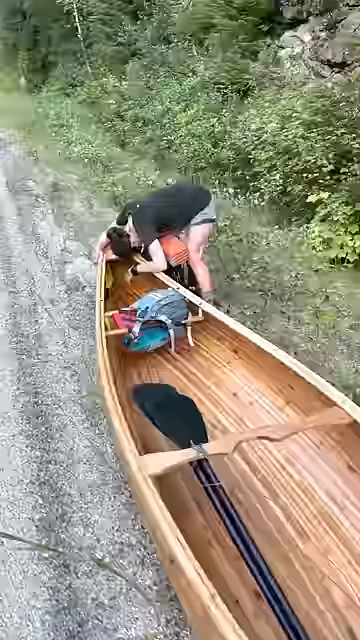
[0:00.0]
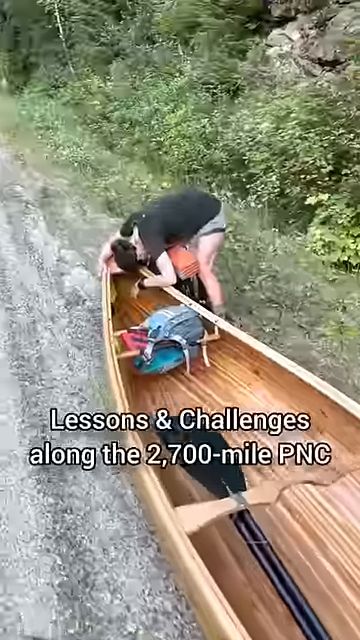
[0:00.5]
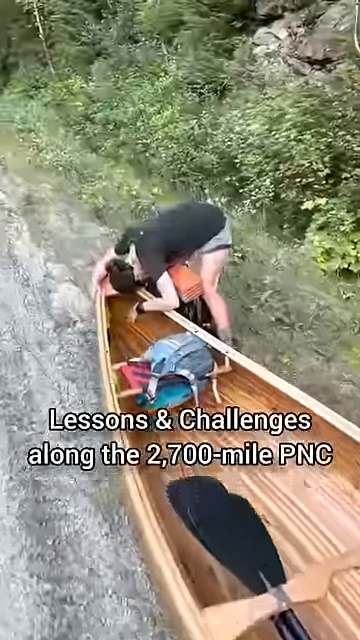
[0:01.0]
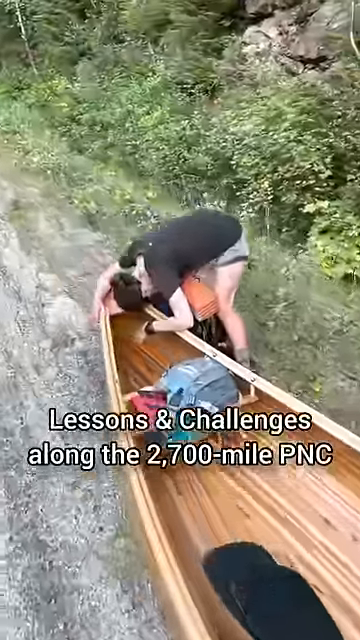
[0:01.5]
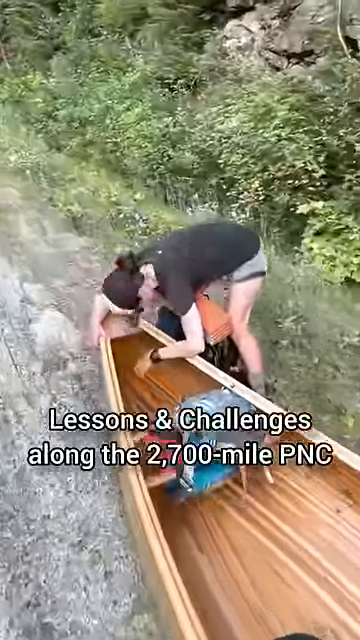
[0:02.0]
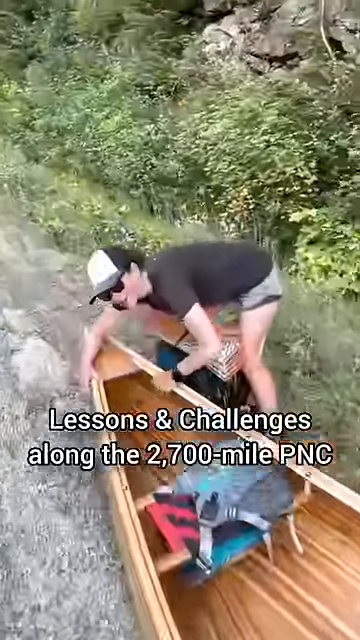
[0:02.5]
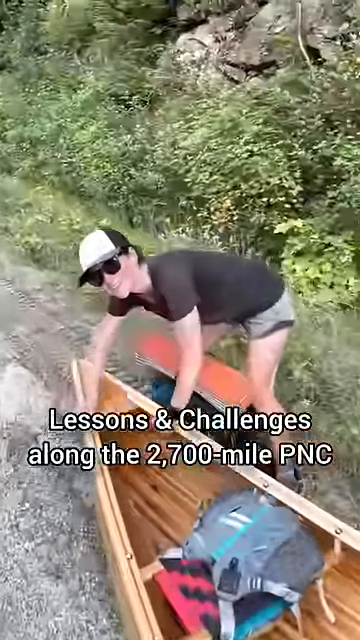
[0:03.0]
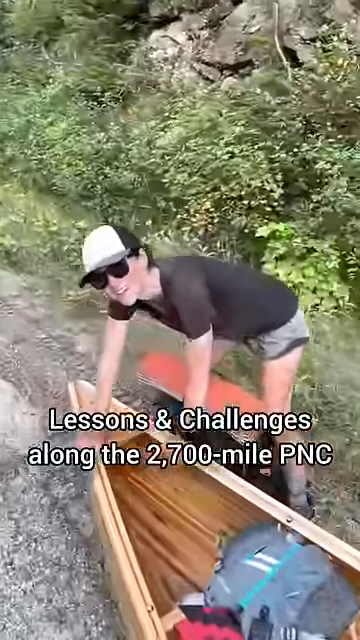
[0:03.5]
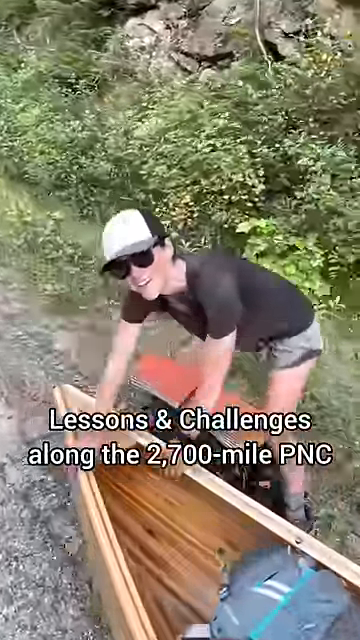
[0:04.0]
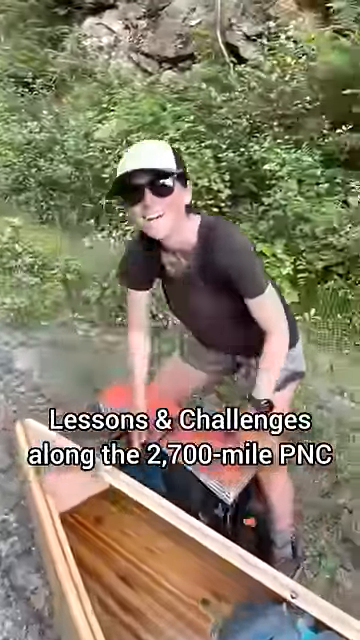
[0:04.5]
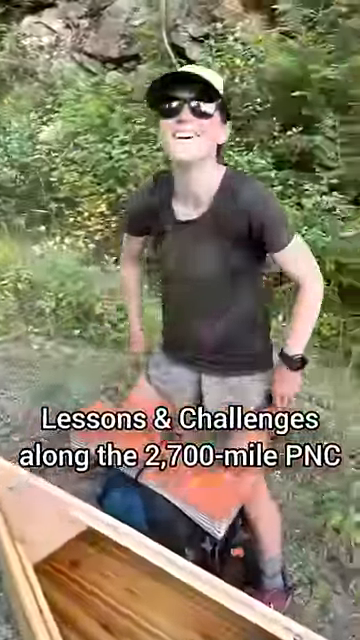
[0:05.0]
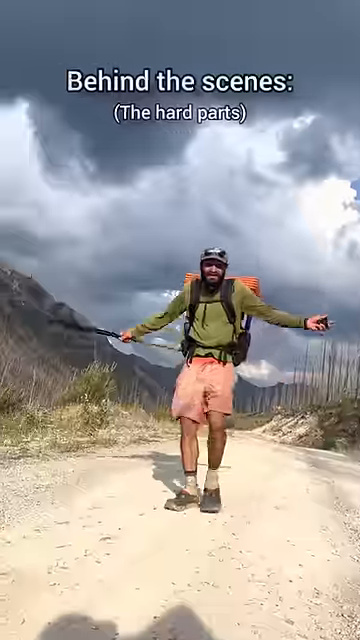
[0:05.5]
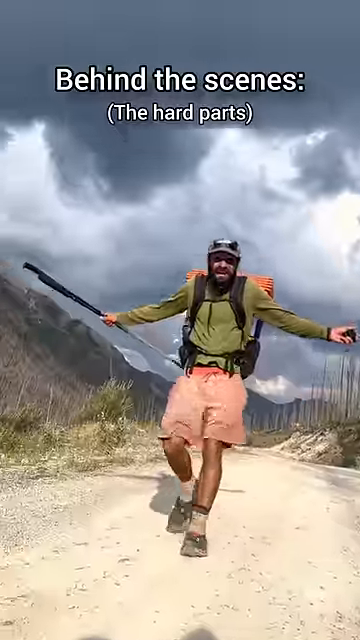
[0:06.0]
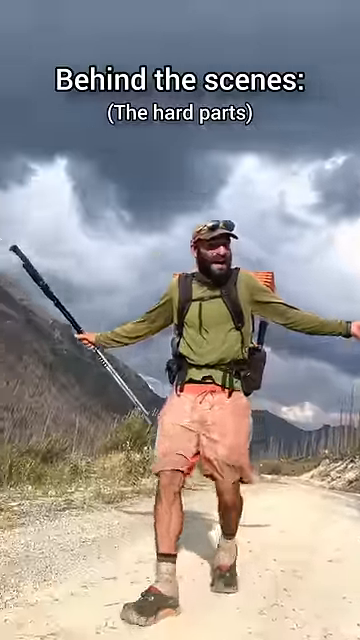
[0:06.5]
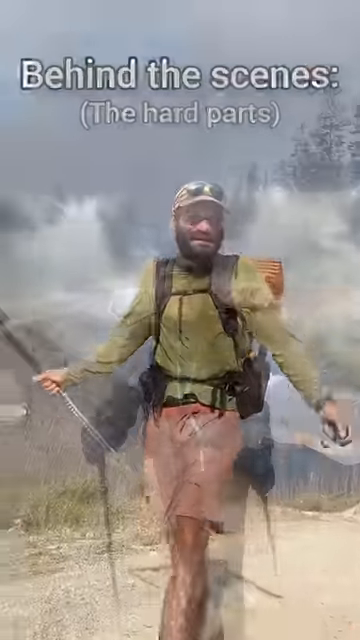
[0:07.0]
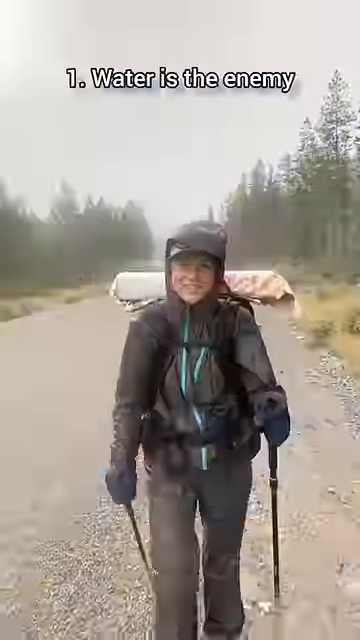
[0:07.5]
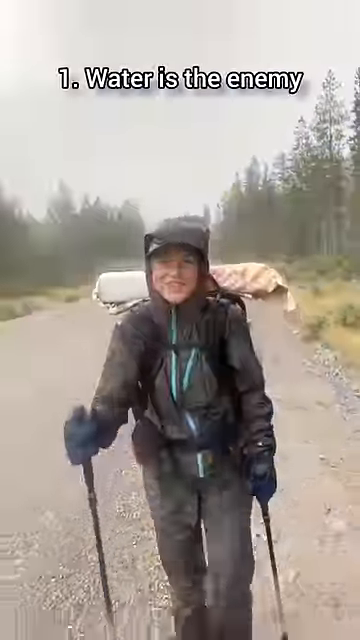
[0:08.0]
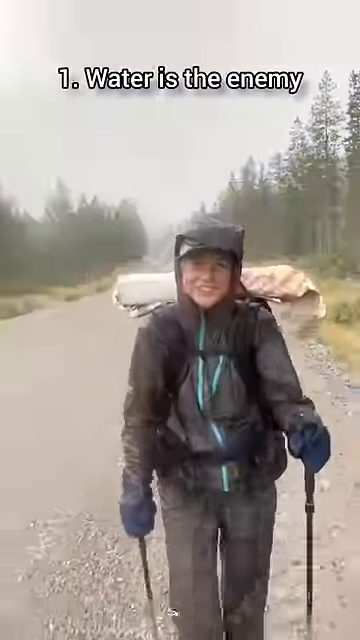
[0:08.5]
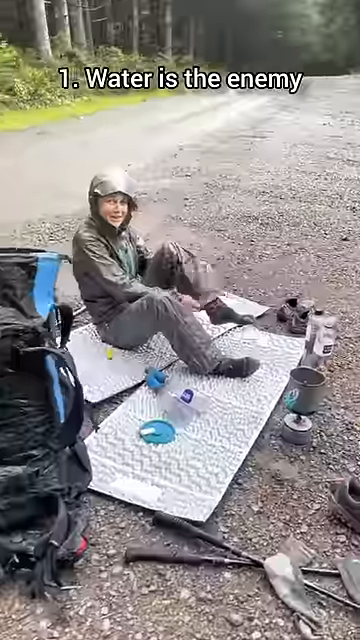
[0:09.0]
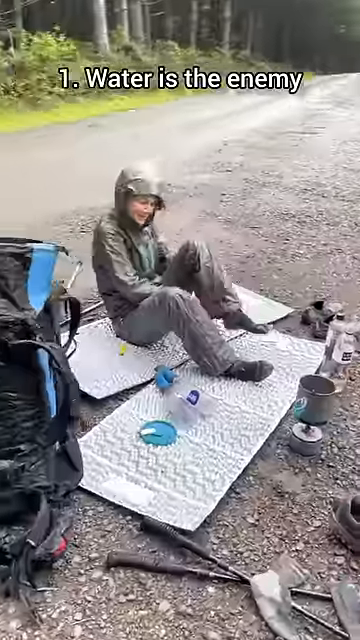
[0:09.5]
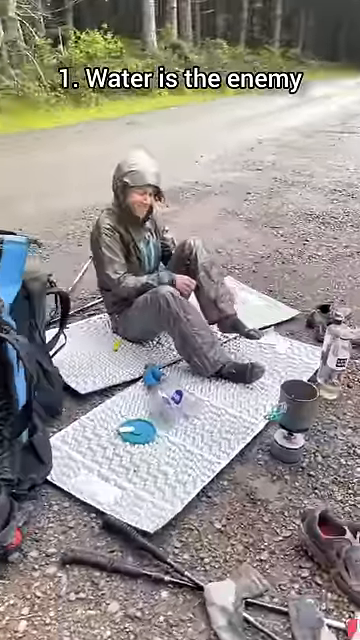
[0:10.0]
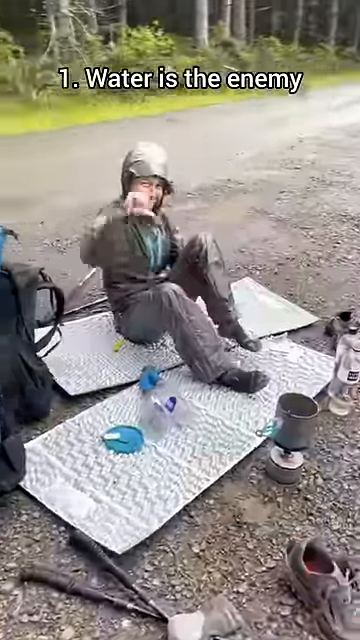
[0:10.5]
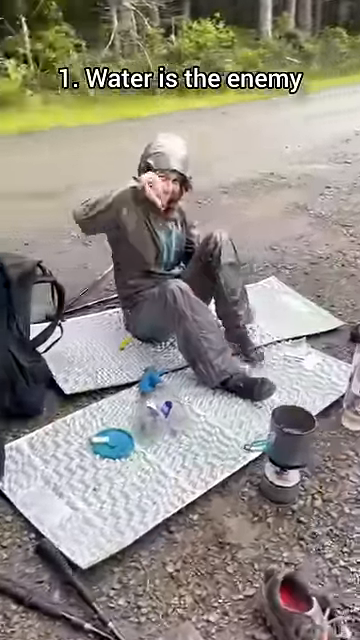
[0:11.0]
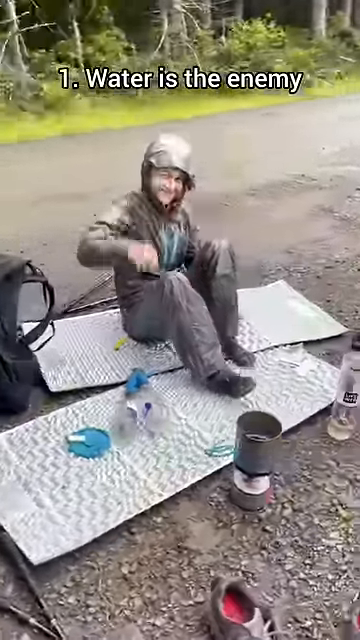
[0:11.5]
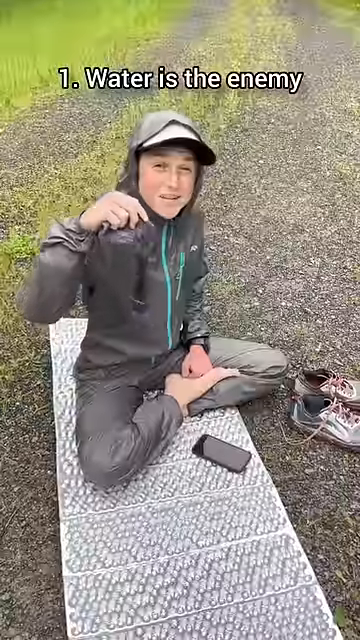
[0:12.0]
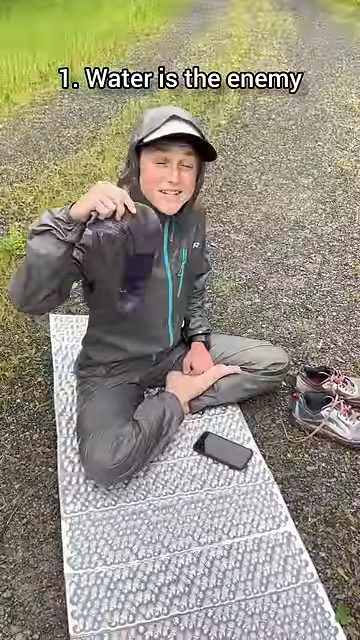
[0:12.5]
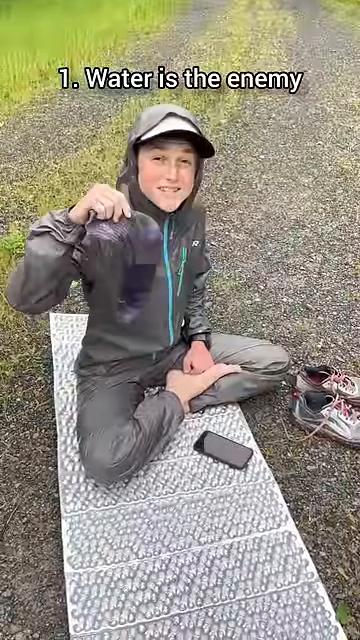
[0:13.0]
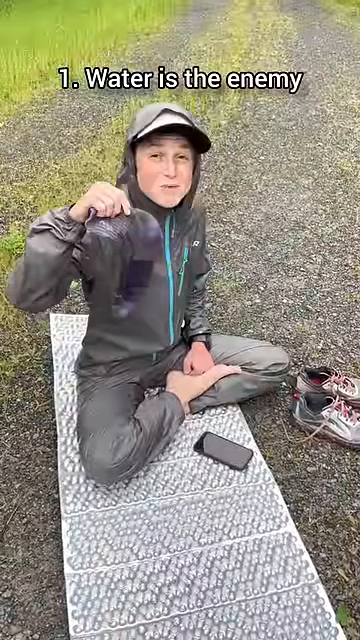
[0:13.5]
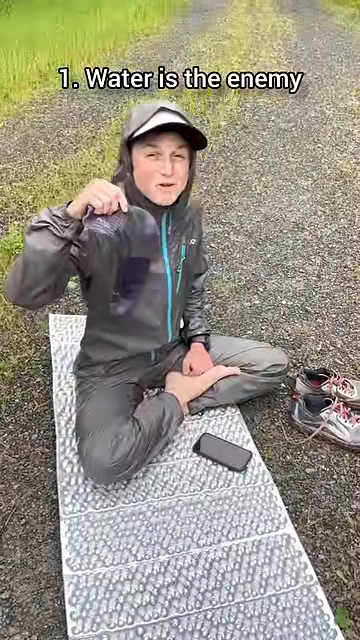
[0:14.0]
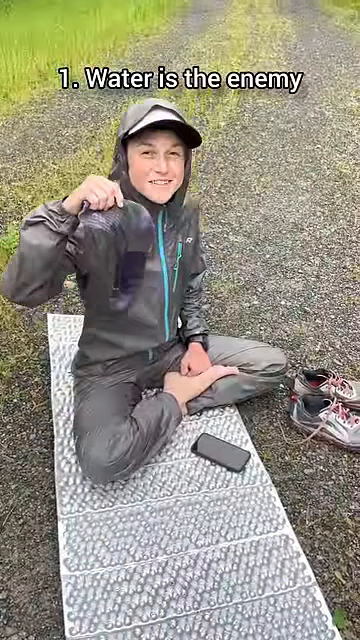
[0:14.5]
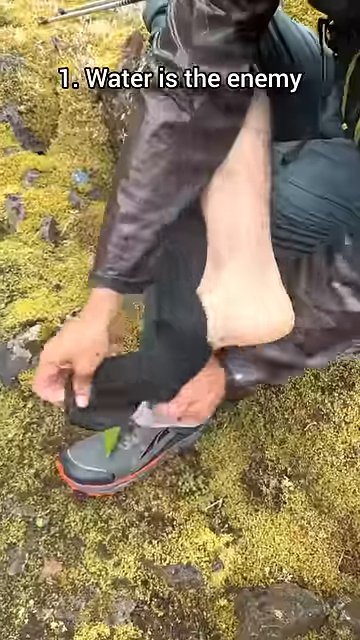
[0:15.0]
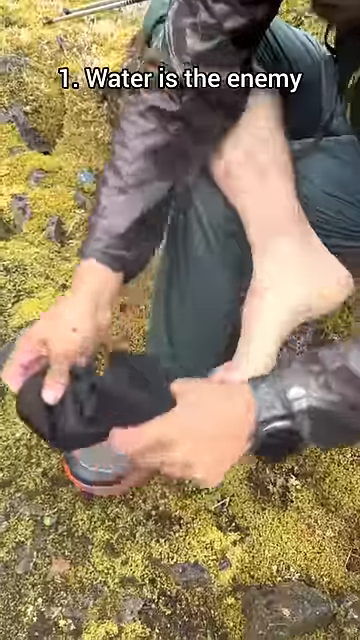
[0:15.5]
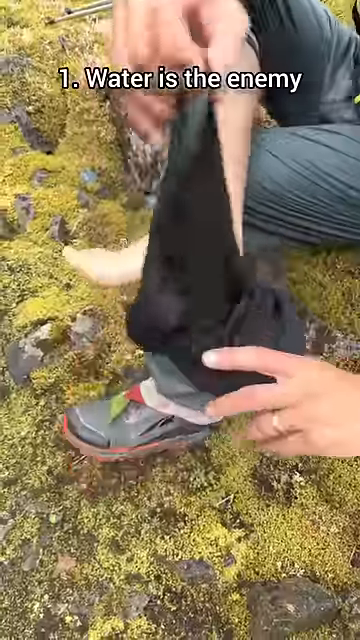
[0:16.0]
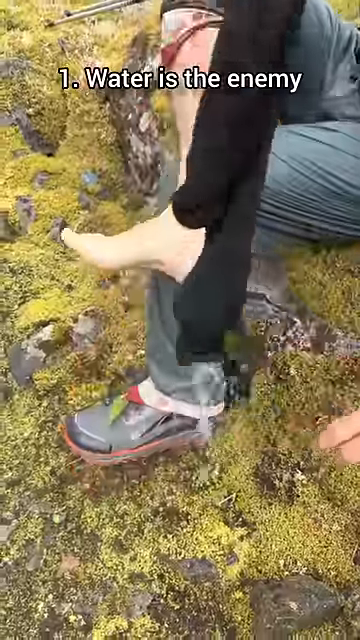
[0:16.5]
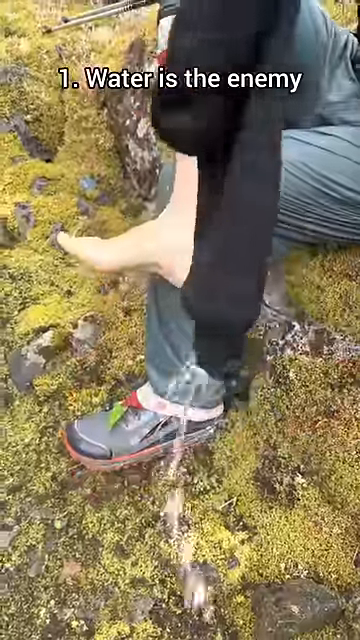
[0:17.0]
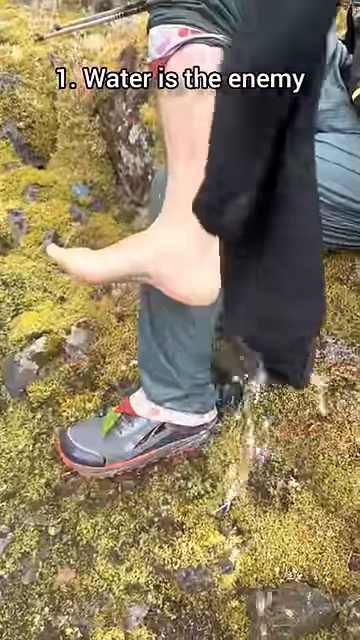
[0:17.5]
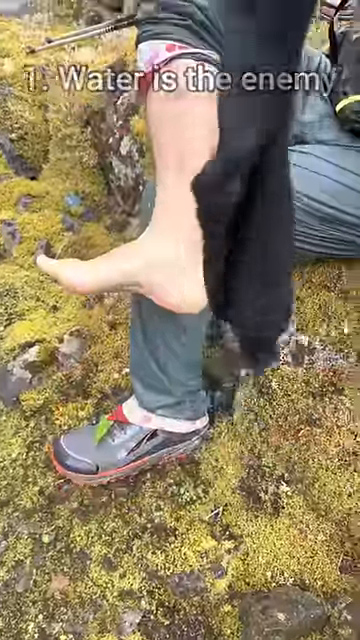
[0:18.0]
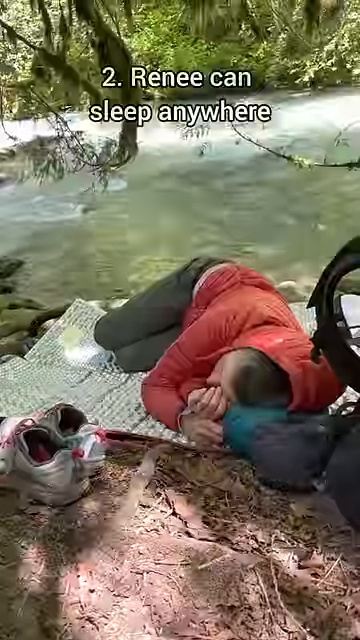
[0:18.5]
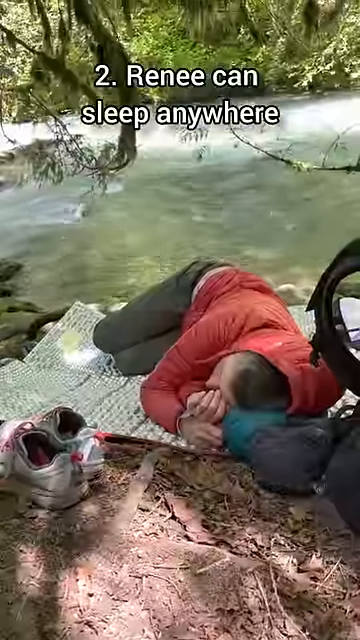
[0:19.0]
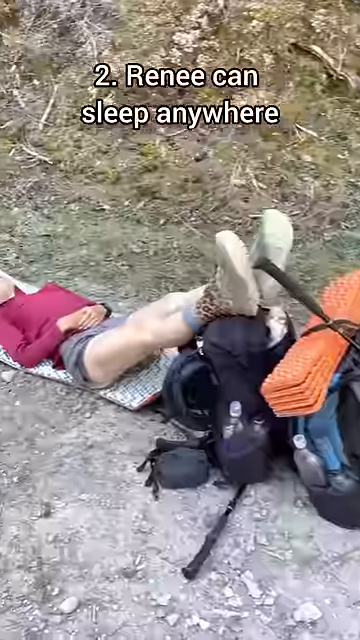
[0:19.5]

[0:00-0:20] On-screen text reads "behind the scenes" and refers to the Pacific Northwest, followed by "the hard parts" and "water is the enemy," then "lessons and challenges along the 2700 mile." The scene shifts back and forth between people who look like they are about to do some kind of combination hike and canoe trip, apparently somewhere in the Pacific Northwest. People in camping gear sit on a mat on the ground, getting ready. Someone appears to be wringing out socks that got full of water. A different shot shows them walking in camping gear with some kind of poles for stability. Another shot shows a guy sleeping on the ground on some kind of mat. It looks like two people getting ready for a long trek with some combined canoeing.